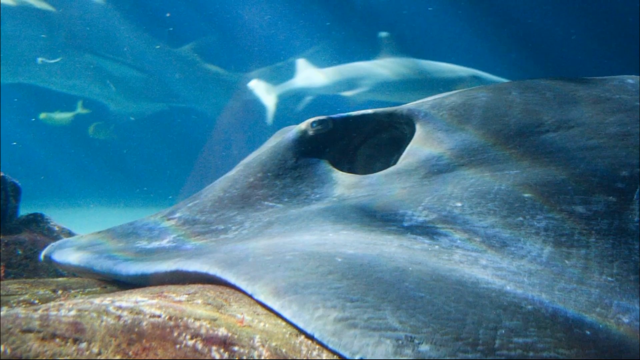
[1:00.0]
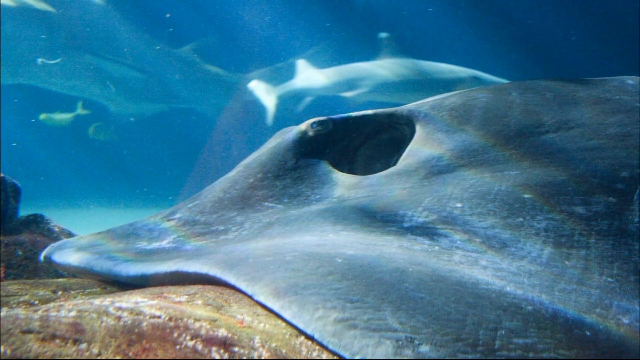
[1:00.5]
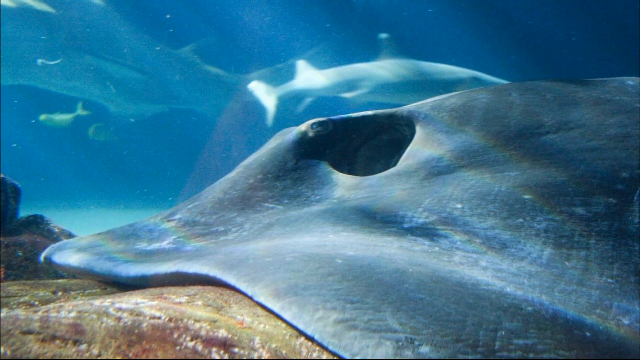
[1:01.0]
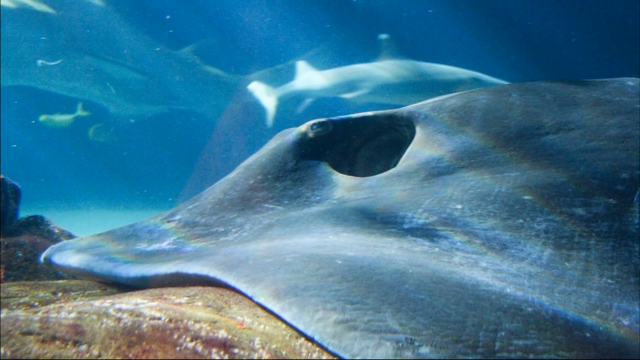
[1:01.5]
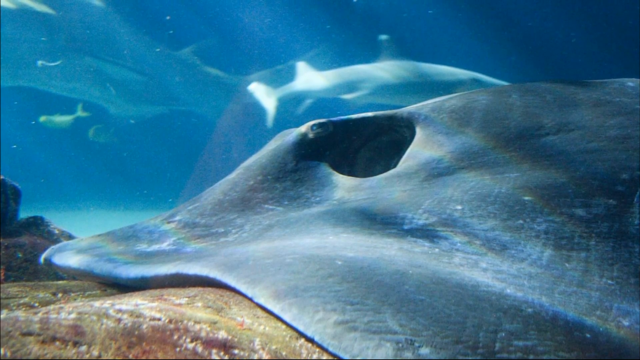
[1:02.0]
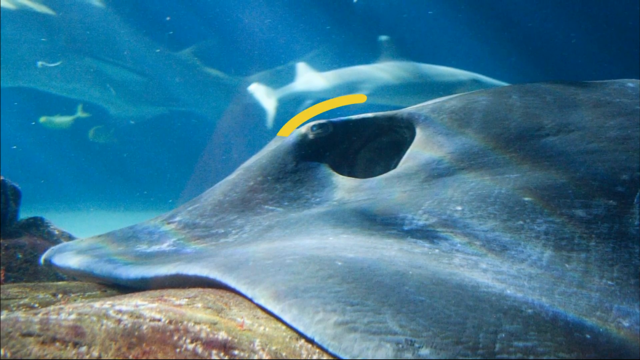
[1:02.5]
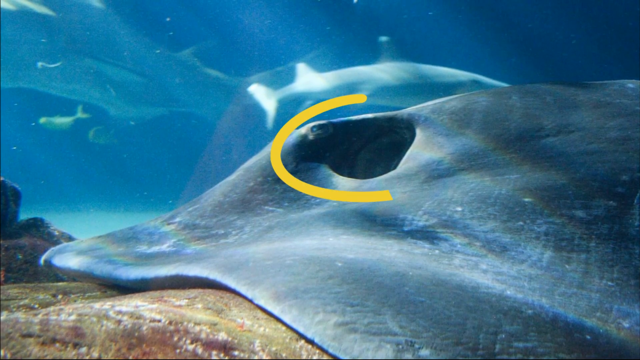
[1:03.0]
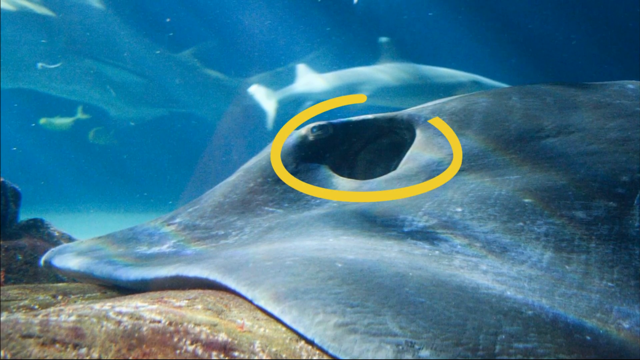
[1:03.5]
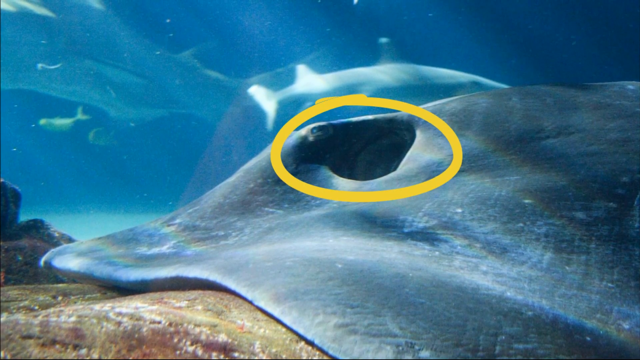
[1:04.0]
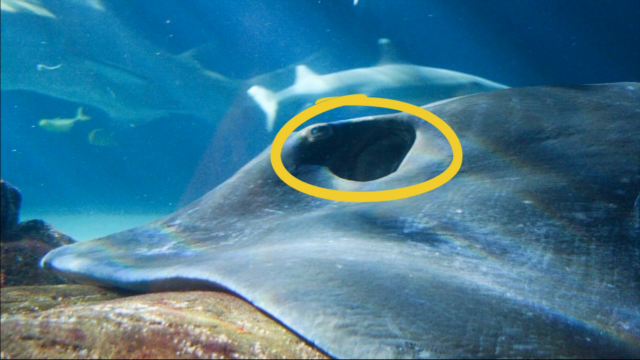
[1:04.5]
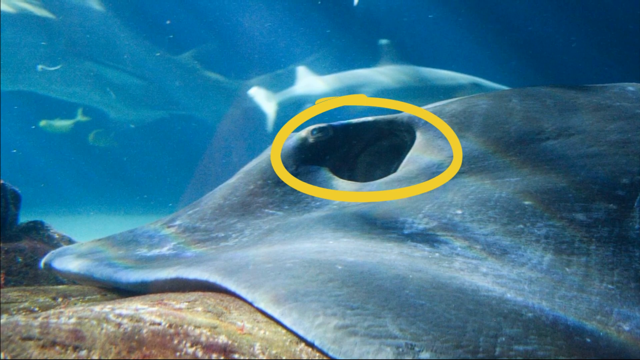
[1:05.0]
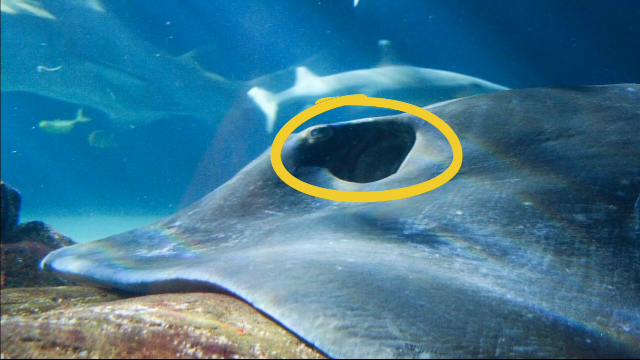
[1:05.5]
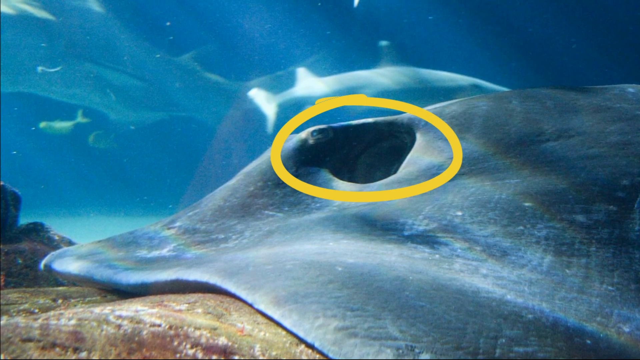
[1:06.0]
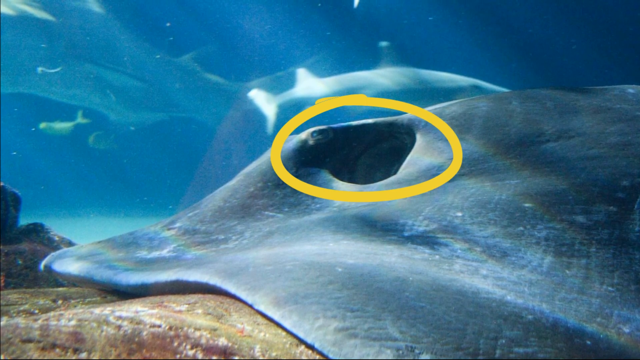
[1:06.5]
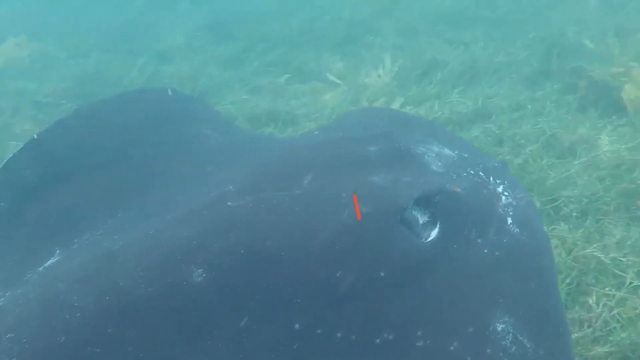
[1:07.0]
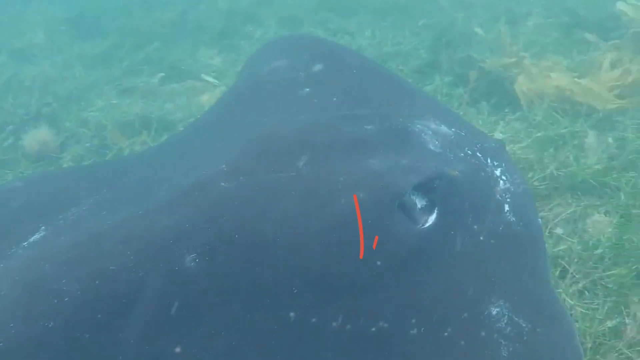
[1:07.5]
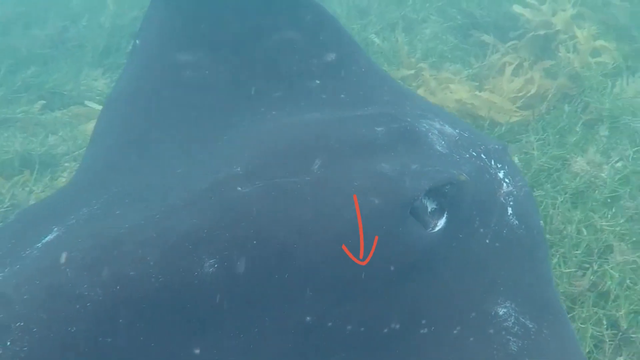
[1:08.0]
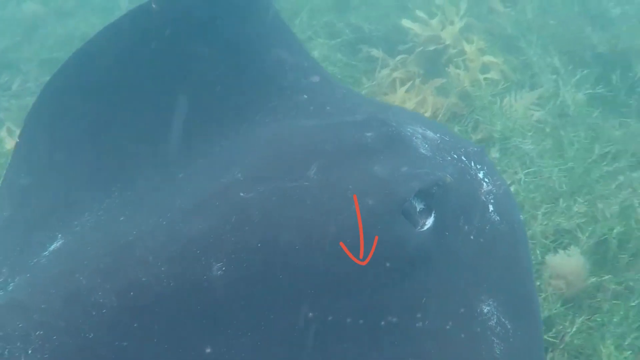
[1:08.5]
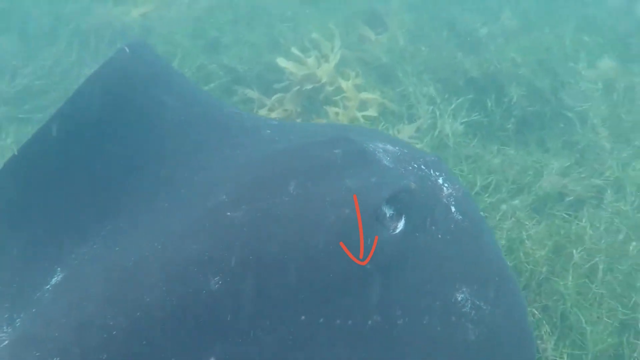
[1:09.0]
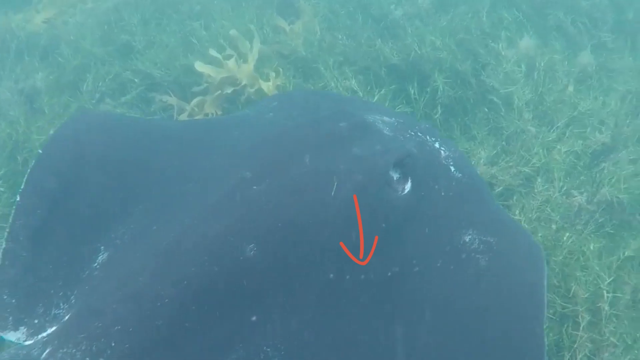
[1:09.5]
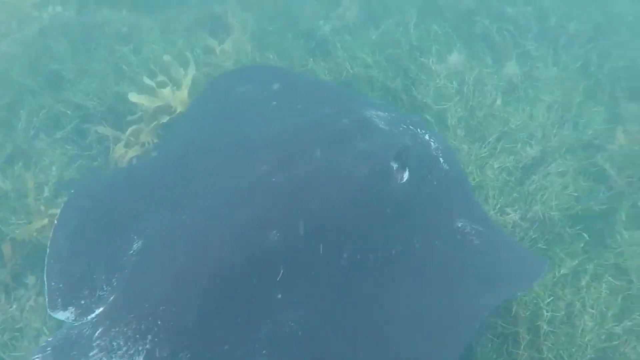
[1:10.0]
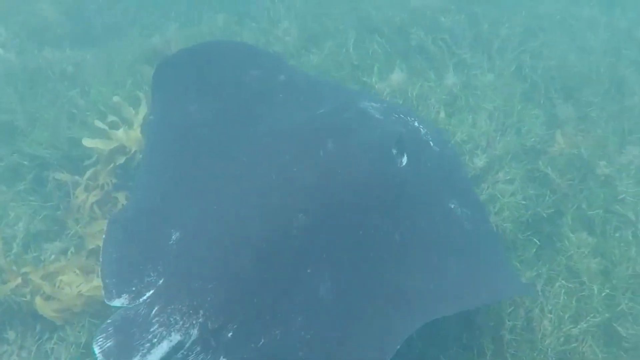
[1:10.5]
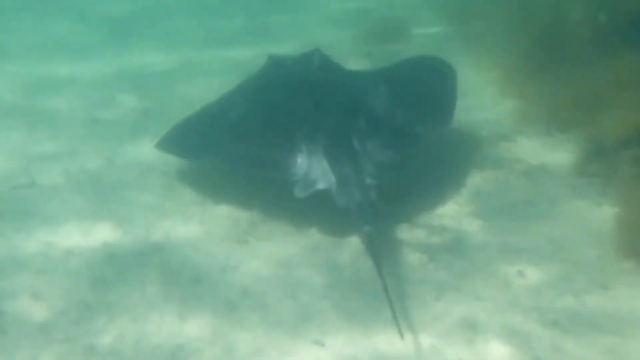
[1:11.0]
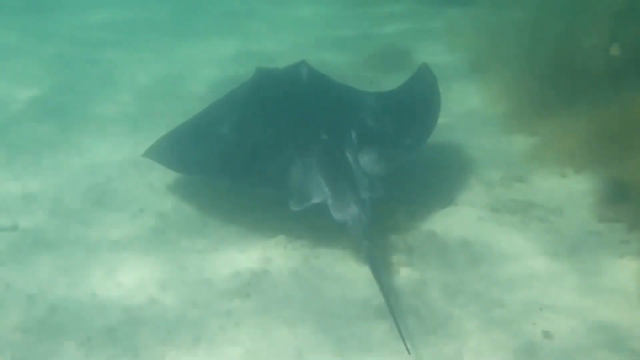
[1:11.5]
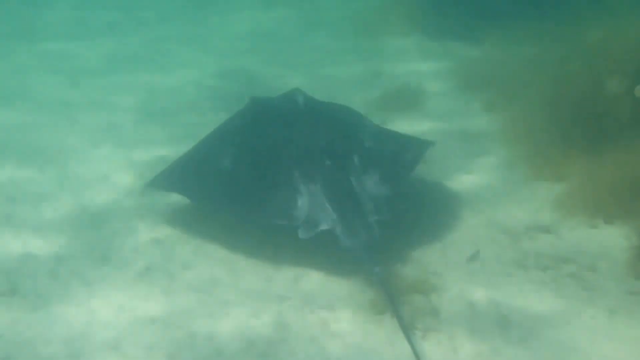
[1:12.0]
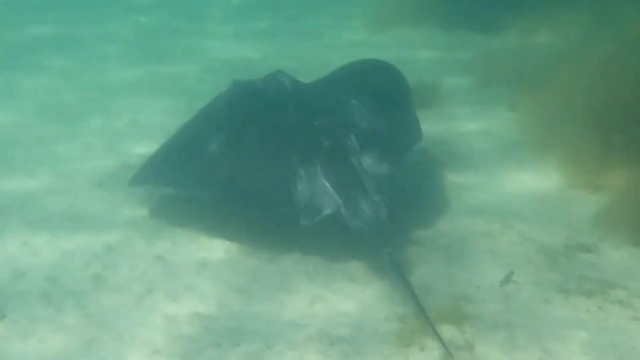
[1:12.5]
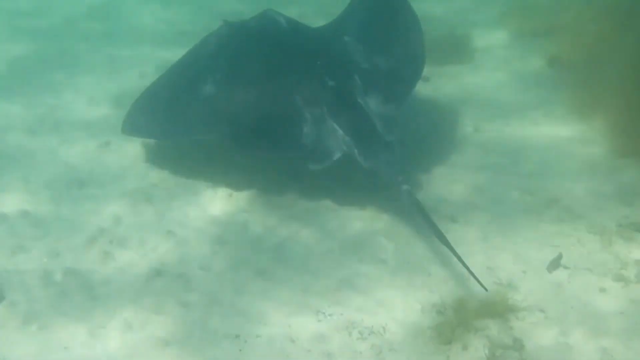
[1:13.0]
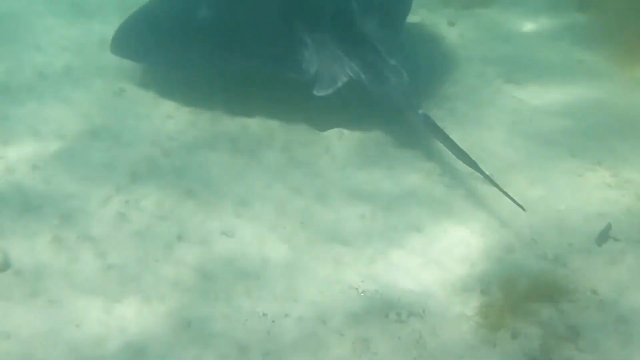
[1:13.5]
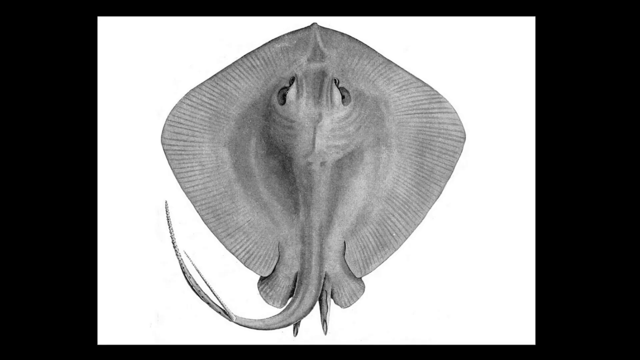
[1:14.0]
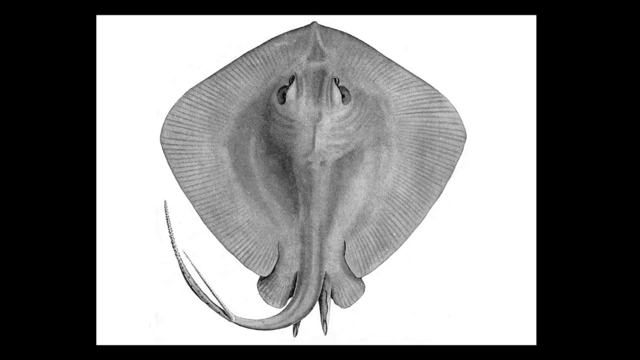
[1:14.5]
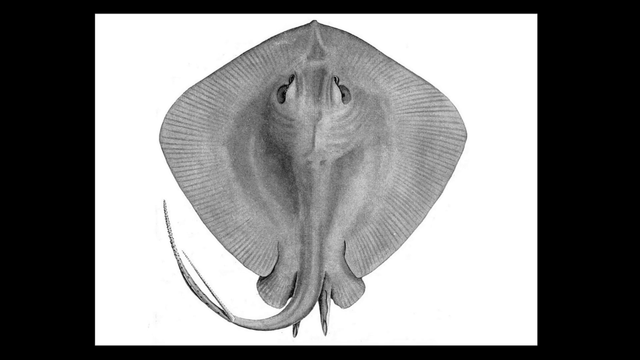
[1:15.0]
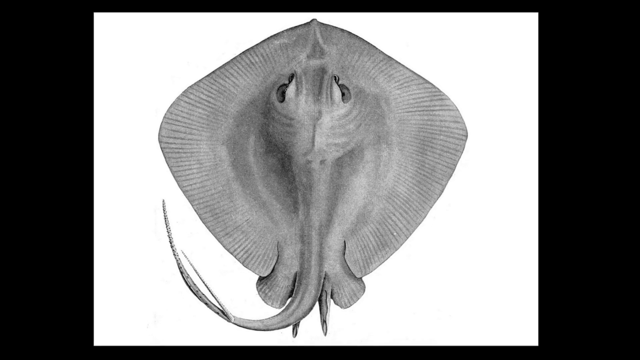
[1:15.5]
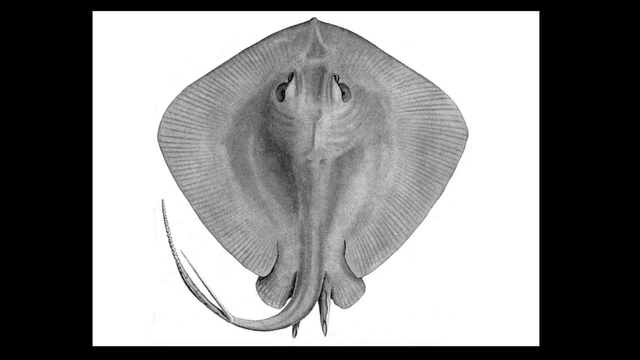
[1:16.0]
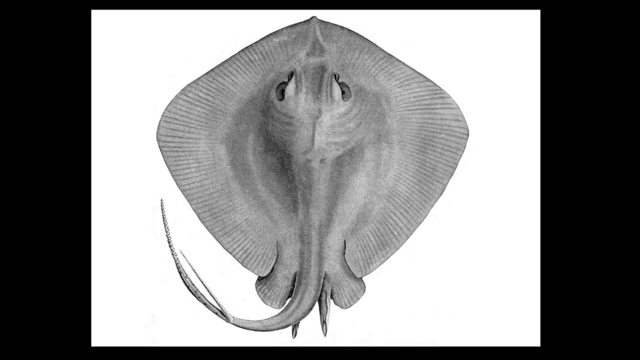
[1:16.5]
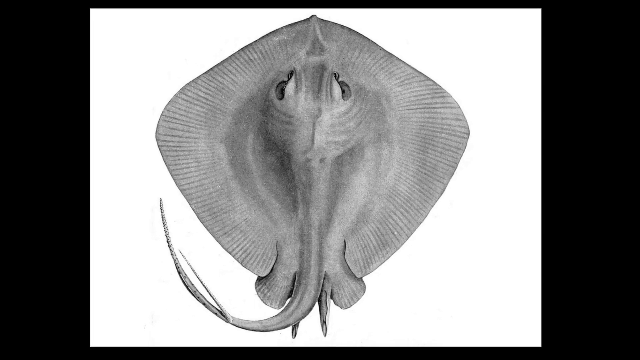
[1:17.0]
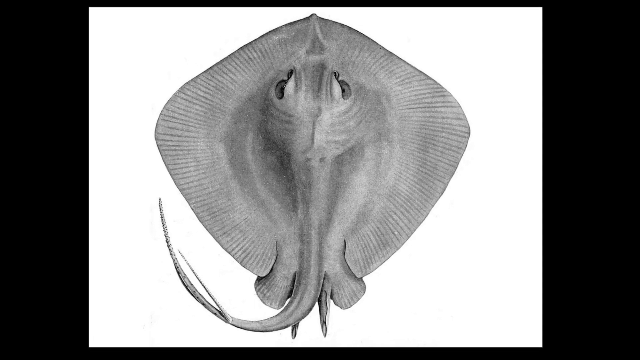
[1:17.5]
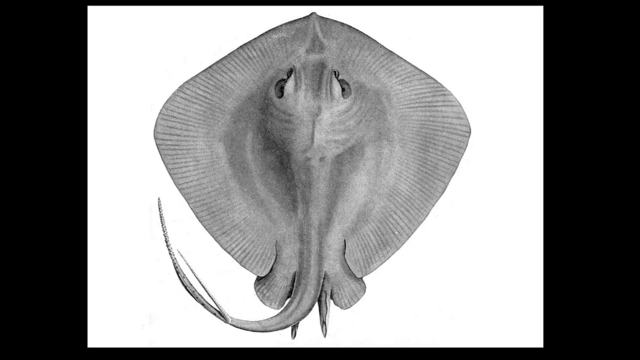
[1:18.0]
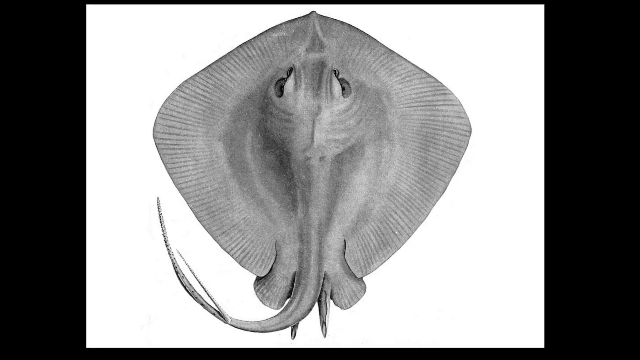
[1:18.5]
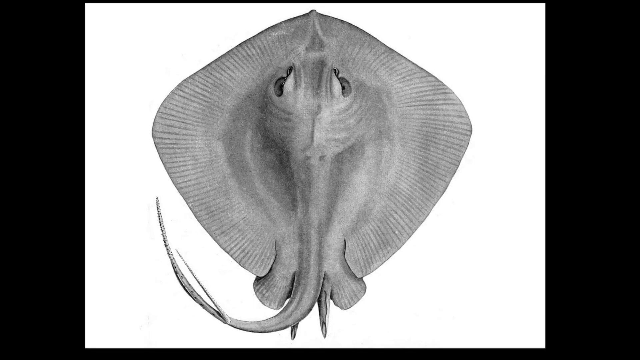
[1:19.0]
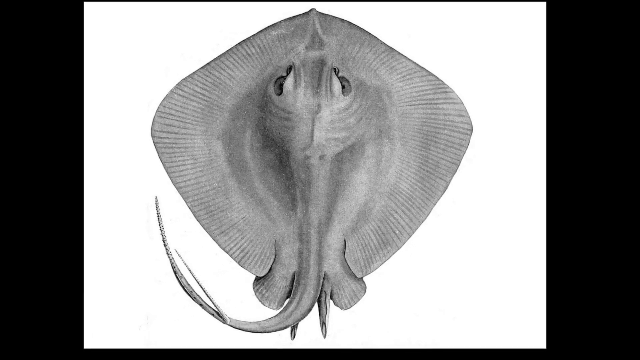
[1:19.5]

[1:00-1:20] A picture shows a light gray stingray. Lights reflect off its surface, producing multiple colours including blue, green and yellow. Fish swim in the background, including a shark, some whales and other fish. A hole in the stingray, part of one of its organs, is circled with a yellow marker. Then a top view shows a stingray swimming, with a red arrow pointing to a certain area of it. Next, a stingray swims alone above the ocean floor, with some seaweed to the side; it has very wavy legs and wavy hands. Then a black and white photo shows a top view of a very large stingray. It has two holes near the center, to the side, and the rest of it is kind of extended like a mask. Its tail is close to the entire length of its body.